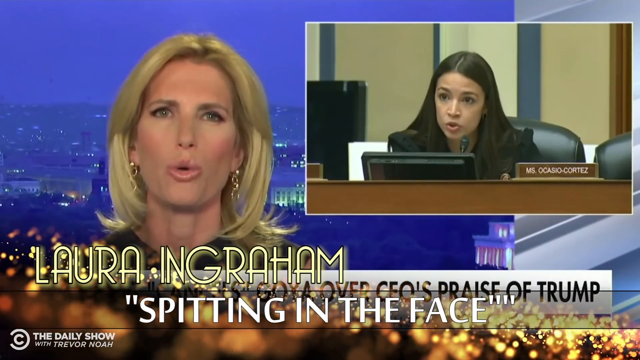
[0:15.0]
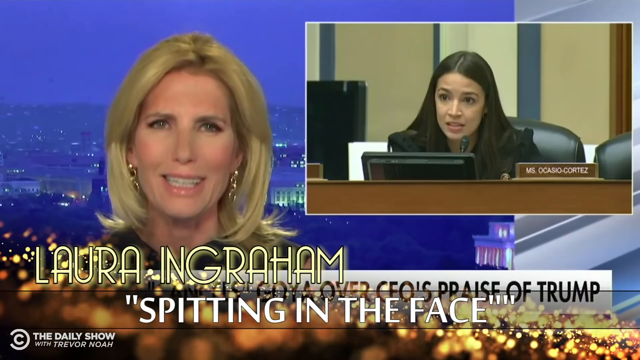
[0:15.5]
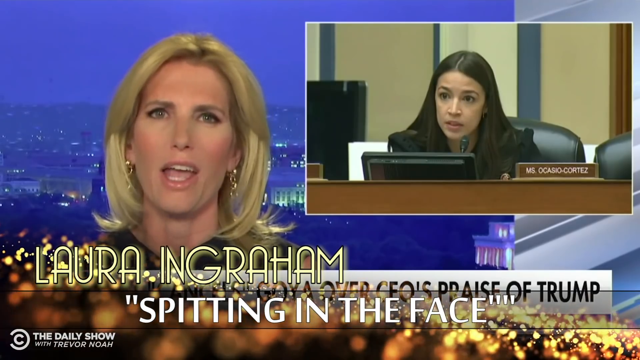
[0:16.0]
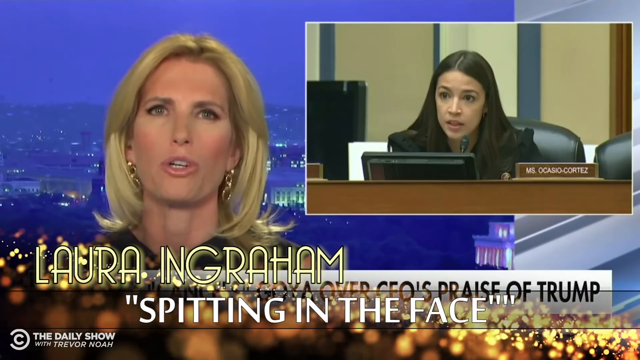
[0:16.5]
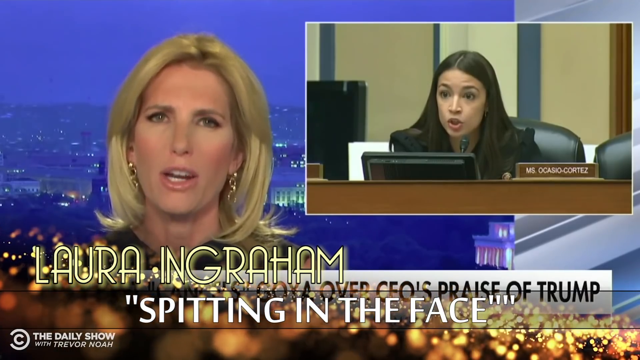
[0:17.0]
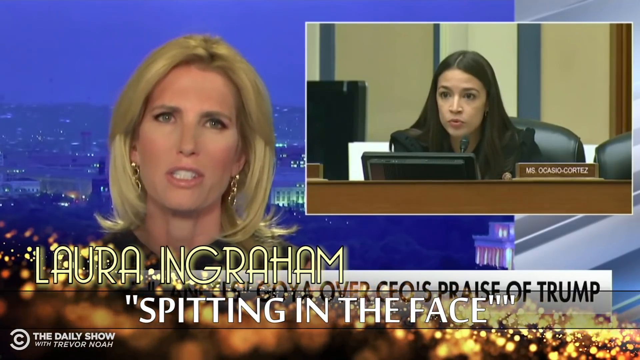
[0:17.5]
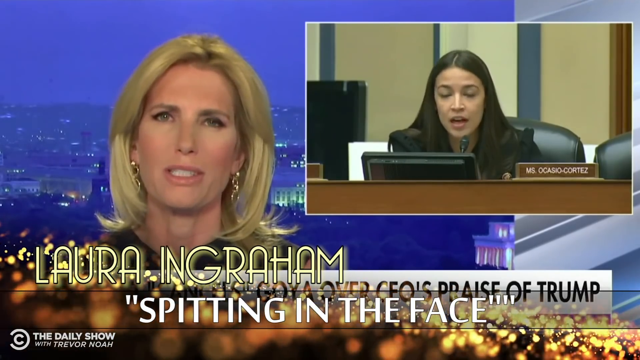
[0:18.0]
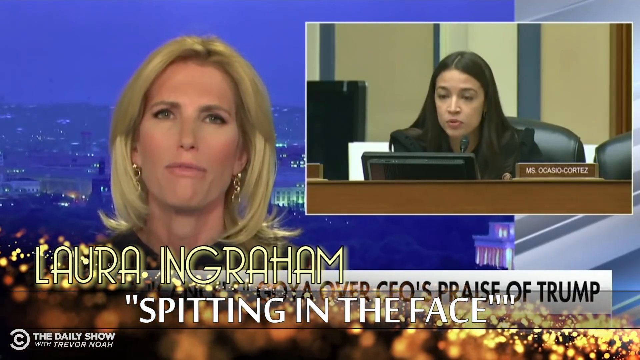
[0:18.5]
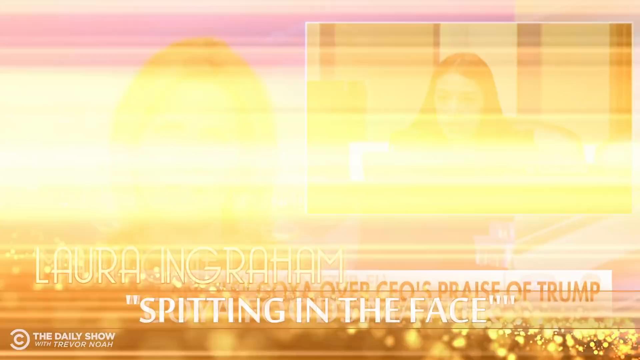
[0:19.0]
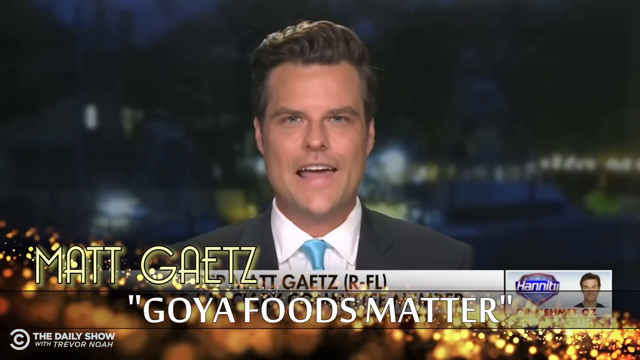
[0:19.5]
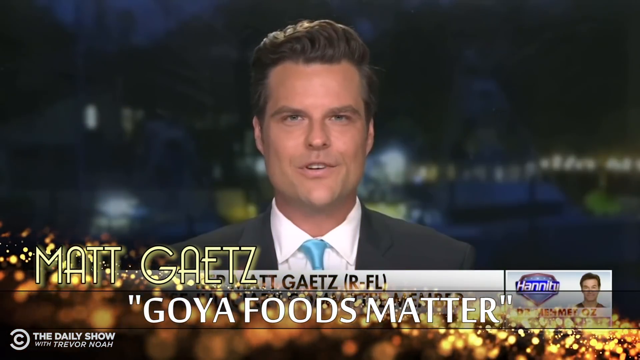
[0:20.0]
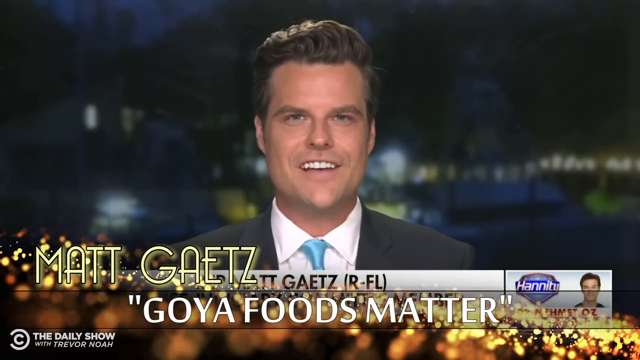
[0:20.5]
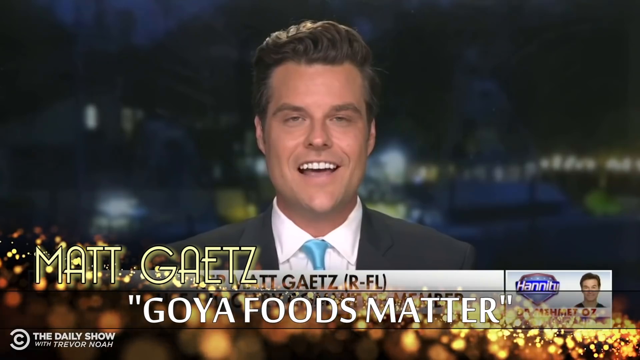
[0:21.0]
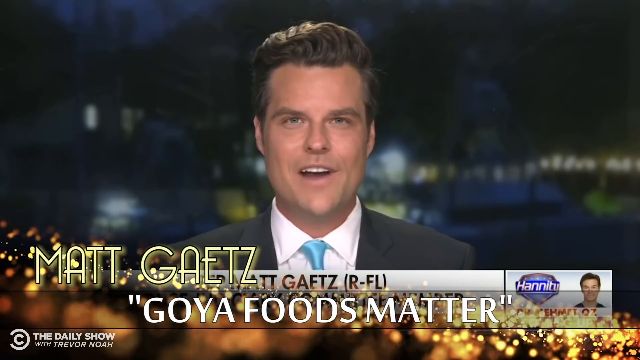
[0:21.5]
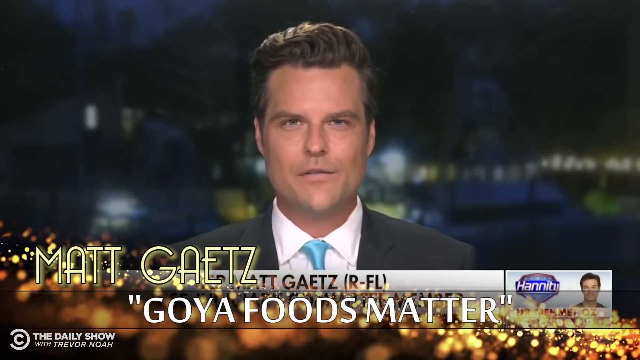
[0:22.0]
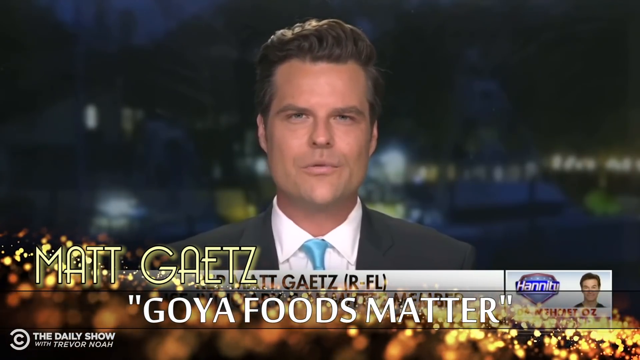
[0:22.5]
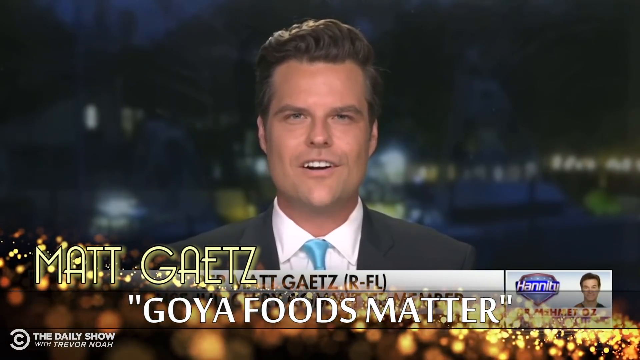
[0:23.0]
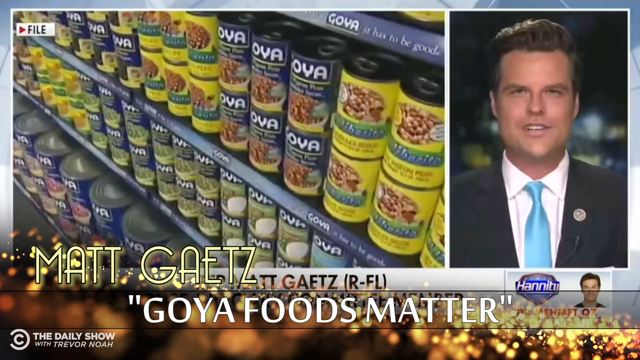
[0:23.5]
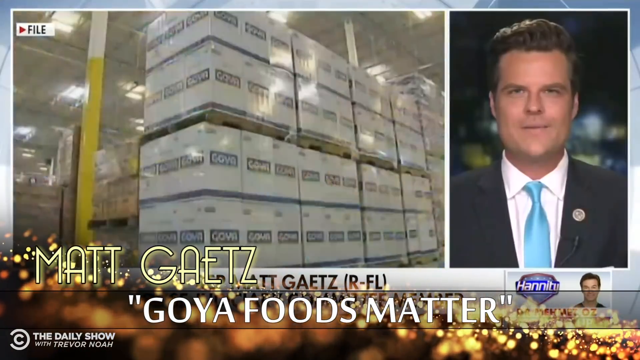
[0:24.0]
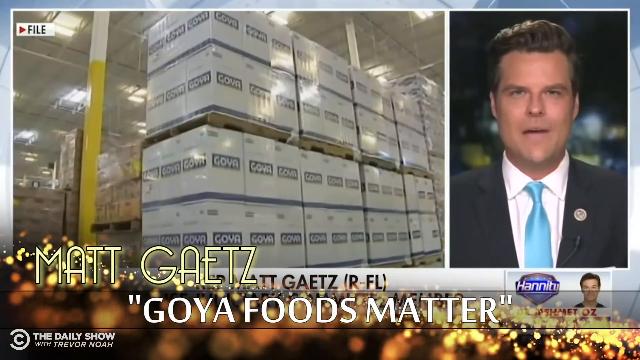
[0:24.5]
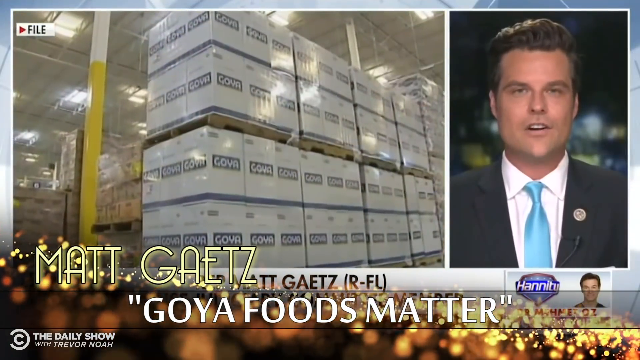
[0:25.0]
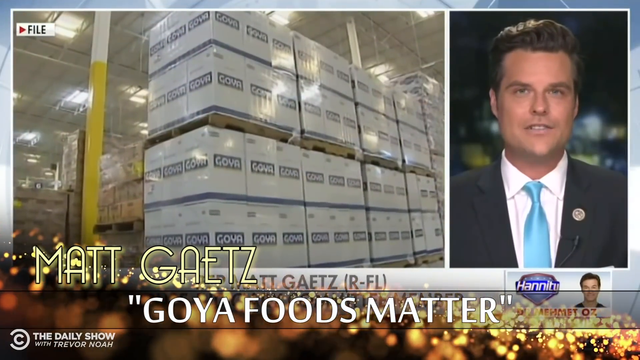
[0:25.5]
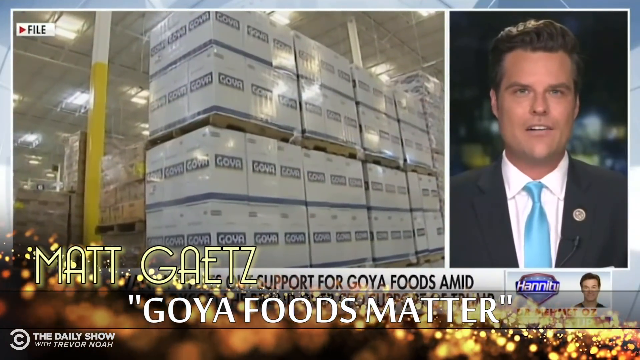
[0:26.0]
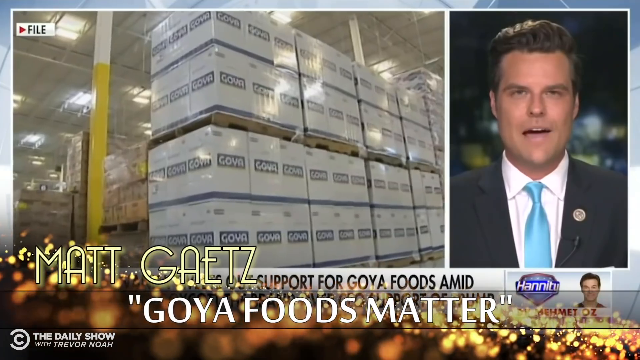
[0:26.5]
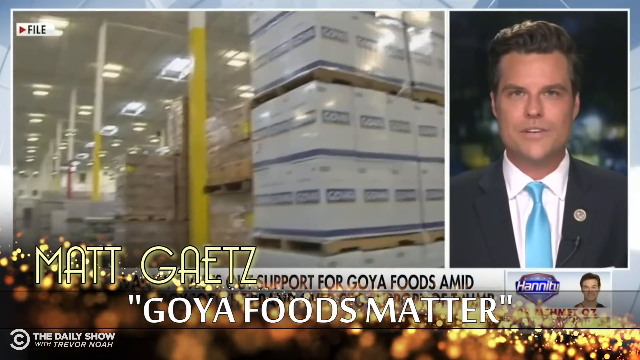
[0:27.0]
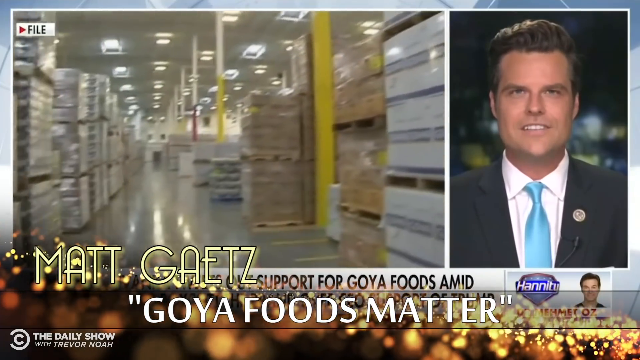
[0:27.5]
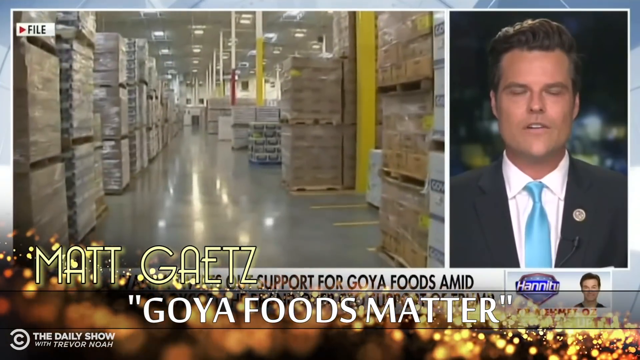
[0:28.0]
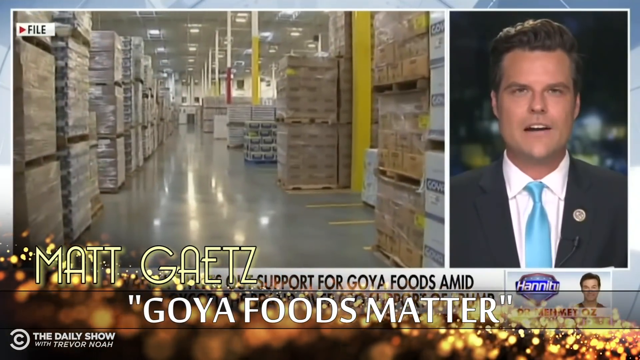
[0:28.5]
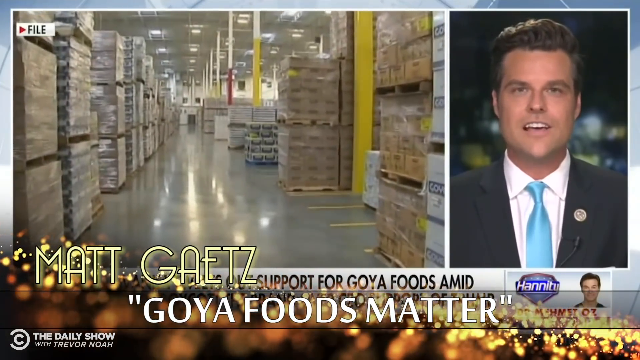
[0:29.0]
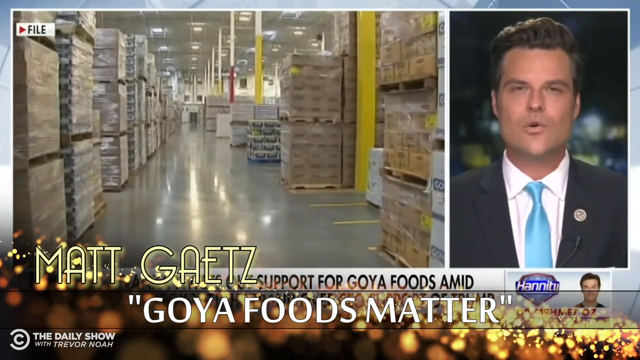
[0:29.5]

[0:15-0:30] The segment, from The Daily Show on Comedy Central, is part of the 64th Annual Outragees, a set of fake awards presented as a comedy bit. Laura Ingraham appears on her Fox News show, with text below that says "spitting in the face," and another video in the top right shows Ms. Ocasio-Cortez. It then transitions to Matt Gaetz, with the text below him reading "Goya Foods Matter." He is talking straight into a camera in what looks like an interview on Hannity on Fox News. A clip on the left side then shows some warehouses full of Goya products.